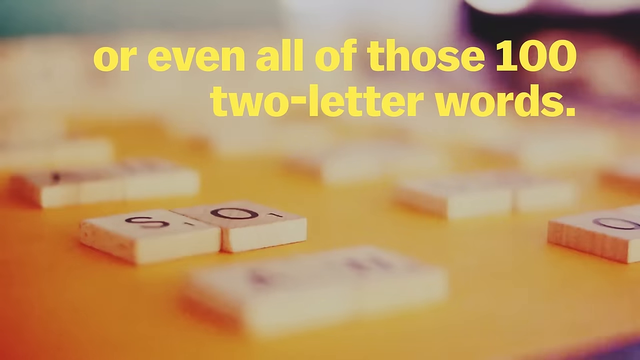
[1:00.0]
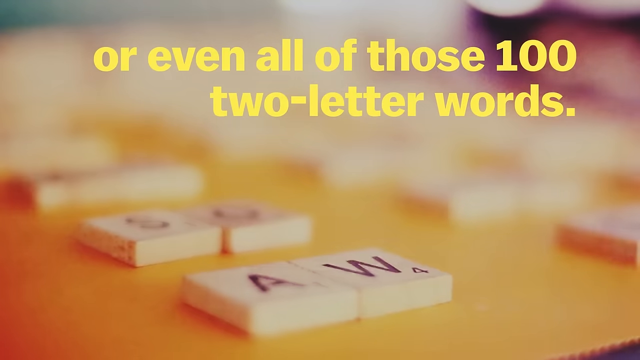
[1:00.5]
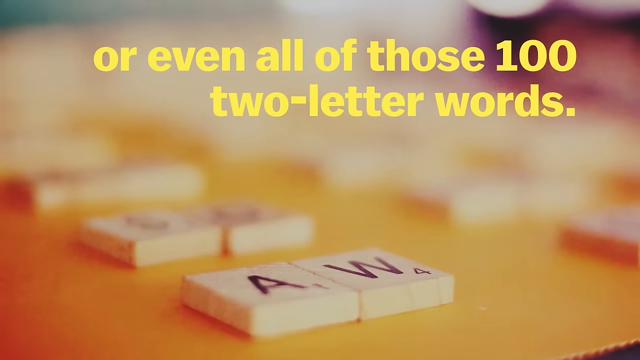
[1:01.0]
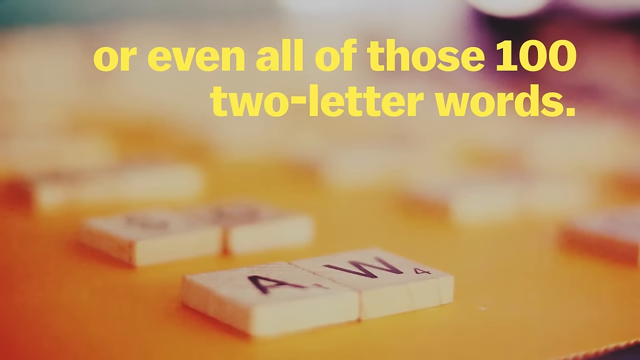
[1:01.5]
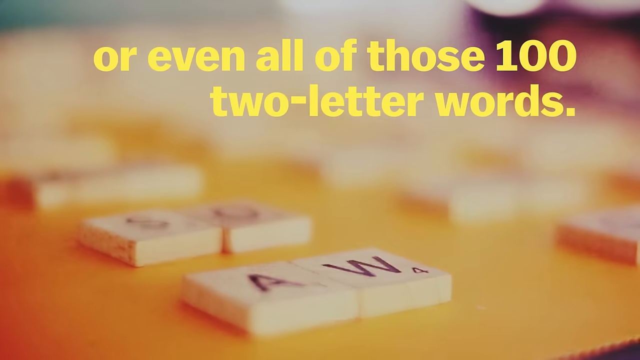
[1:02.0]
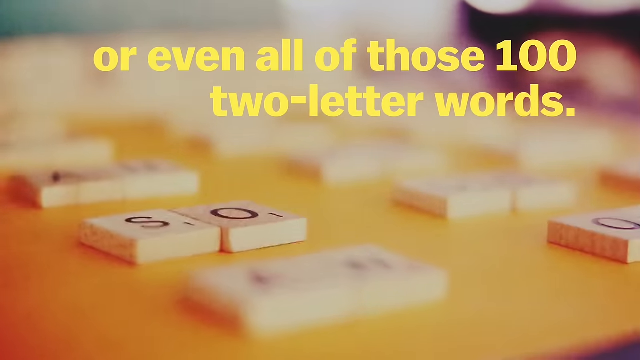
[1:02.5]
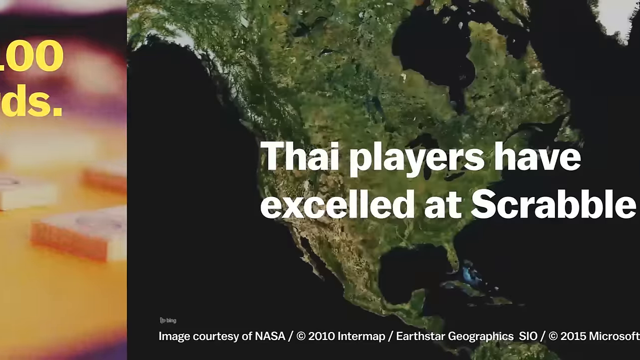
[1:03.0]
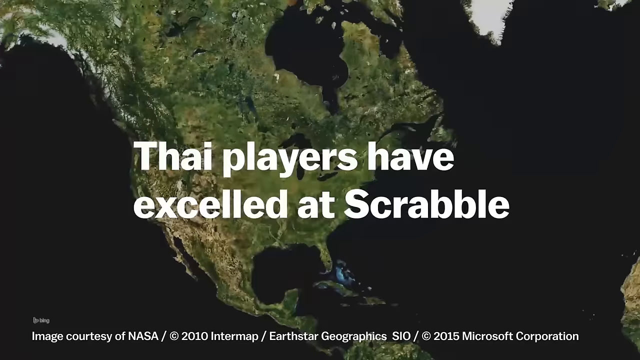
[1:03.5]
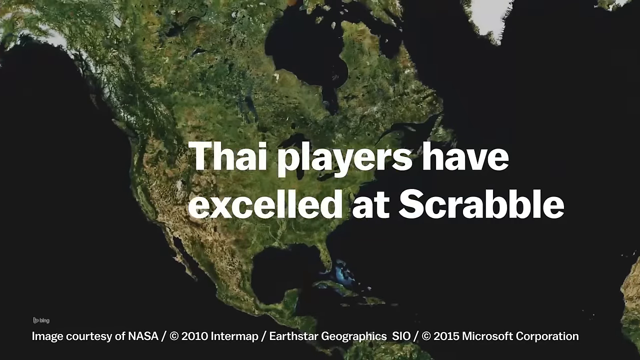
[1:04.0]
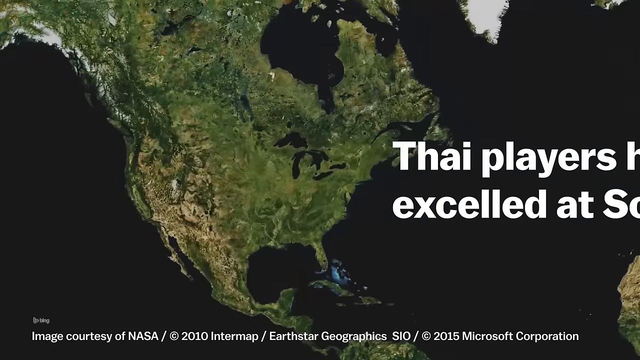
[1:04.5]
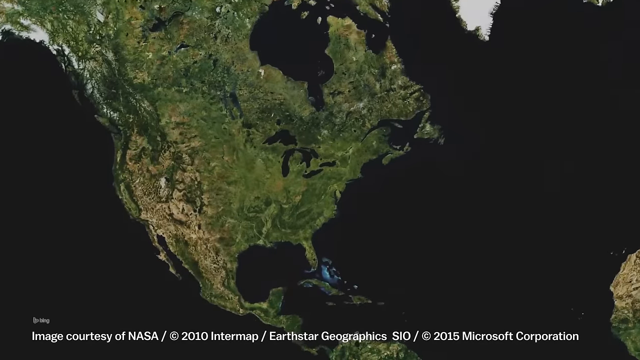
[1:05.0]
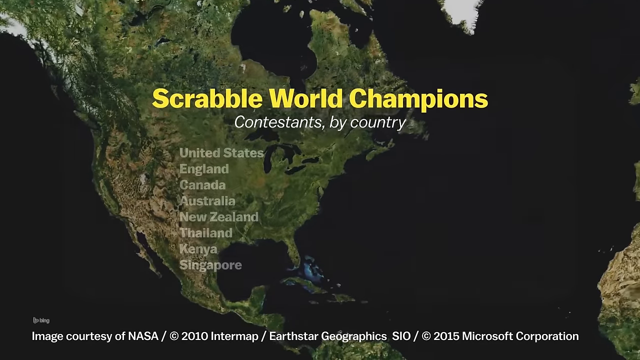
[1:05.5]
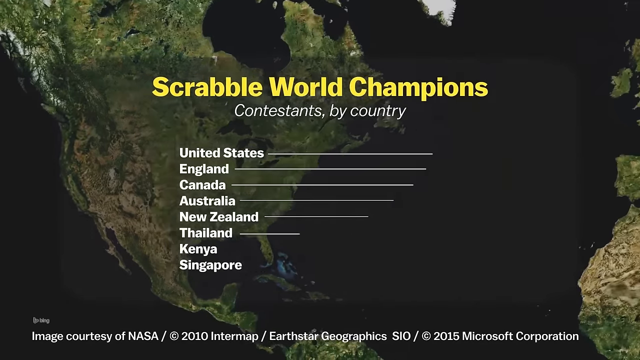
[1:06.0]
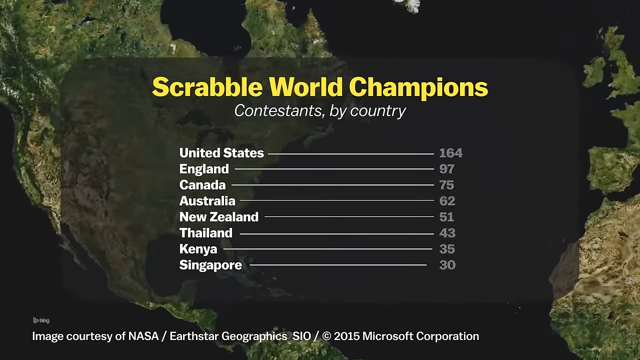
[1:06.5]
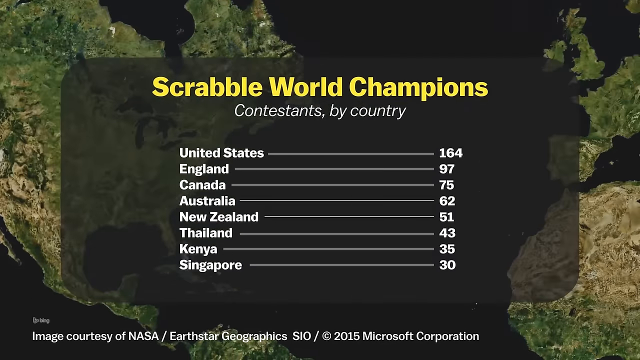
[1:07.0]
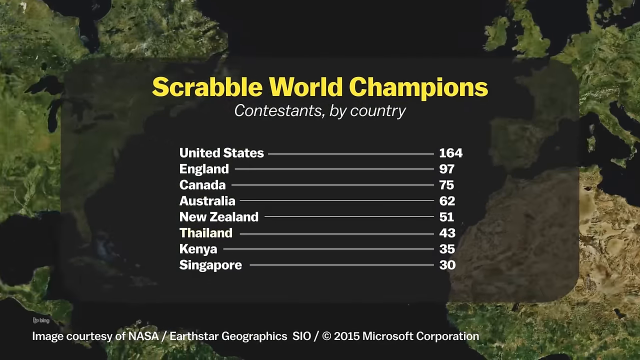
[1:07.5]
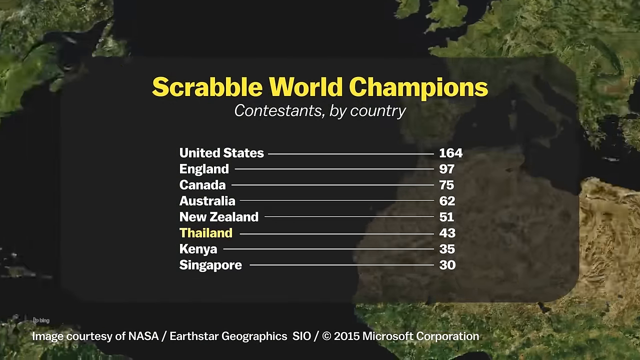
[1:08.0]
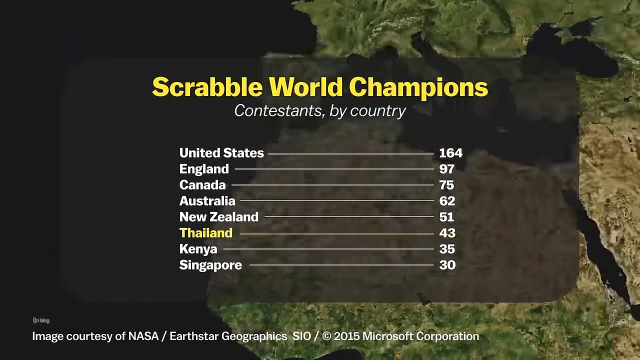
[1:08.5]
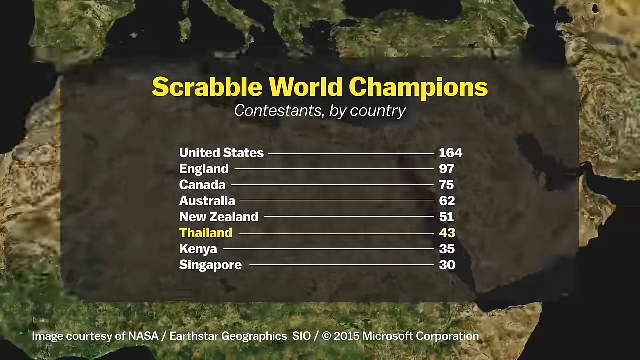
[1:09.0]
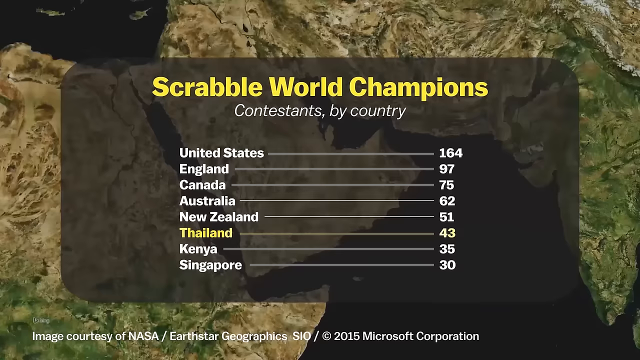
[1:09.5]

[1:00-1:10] The image of Scrabble two-letter words remains, with yellow text reading "or even all of those 100 two-letter words." The video cuts to a map of the US and Canada and around the world, with white text reading "Thai players have excelled at Scrabble." The view slowly zooms toward different countries, and yellow text reads "Scrabble World champions contestants by country," listing the United States with 164, England 97, Canada 75, Australia 62, New Zealand 51, Thailand 43, Kenya 35 and Singapore 30. Thailand is then highlighted in yellow.